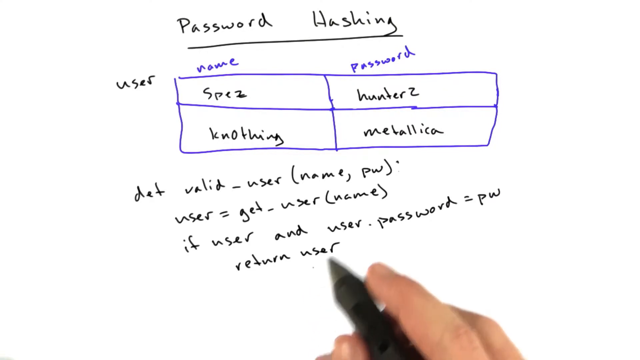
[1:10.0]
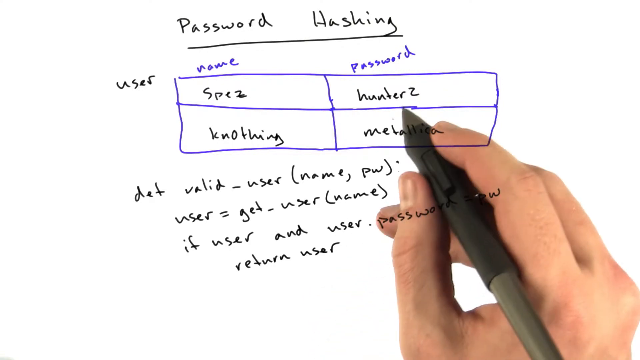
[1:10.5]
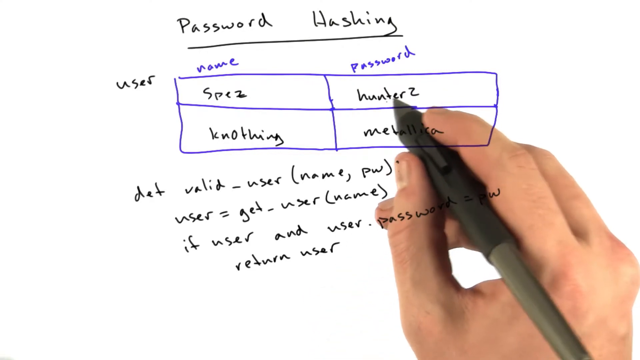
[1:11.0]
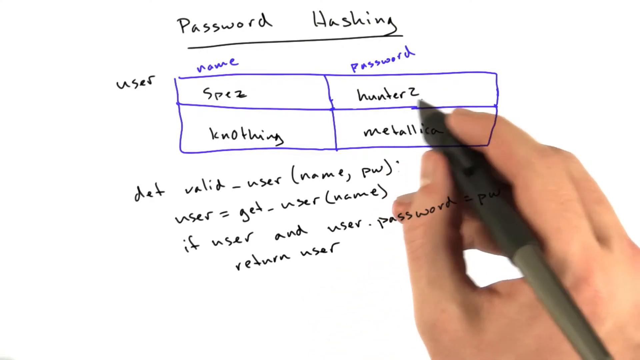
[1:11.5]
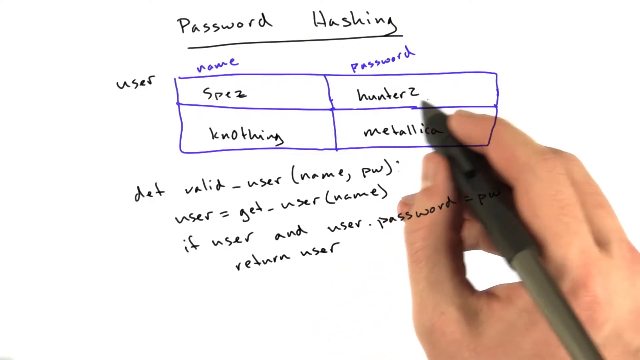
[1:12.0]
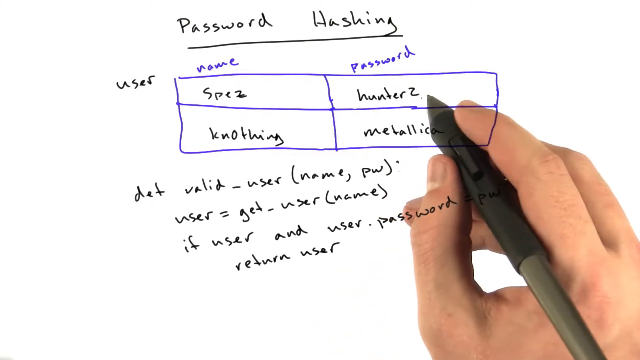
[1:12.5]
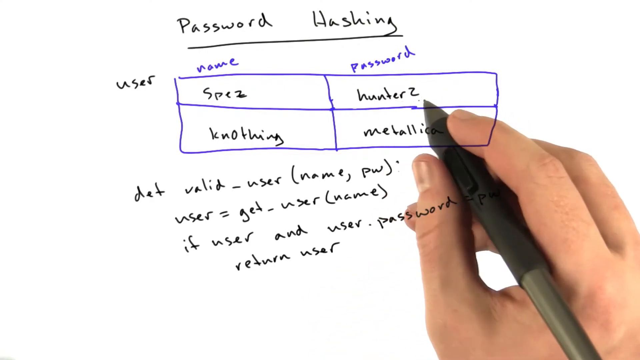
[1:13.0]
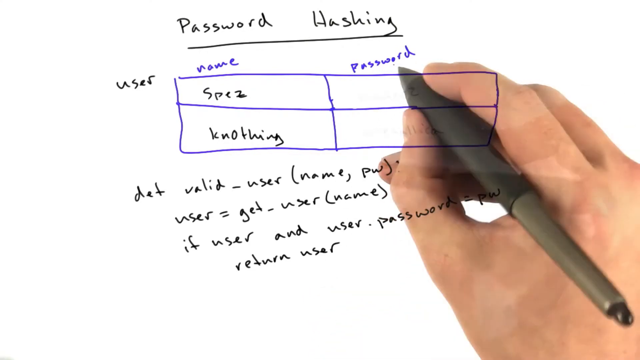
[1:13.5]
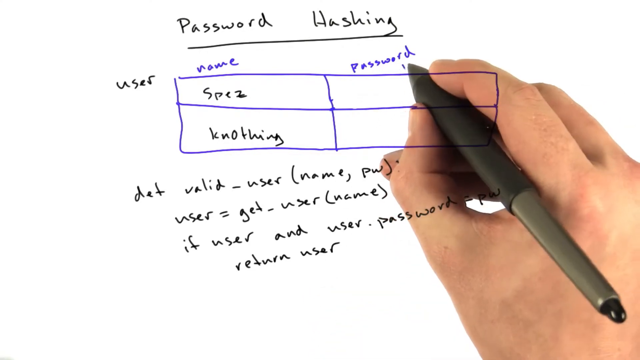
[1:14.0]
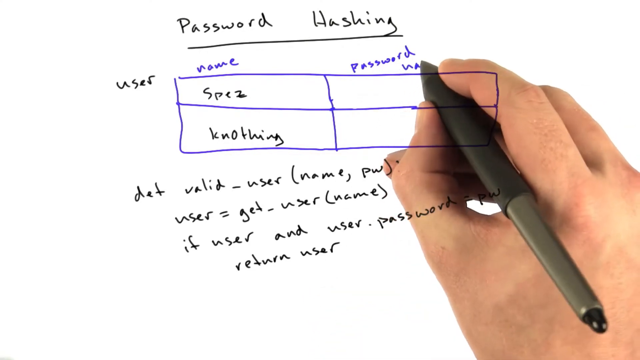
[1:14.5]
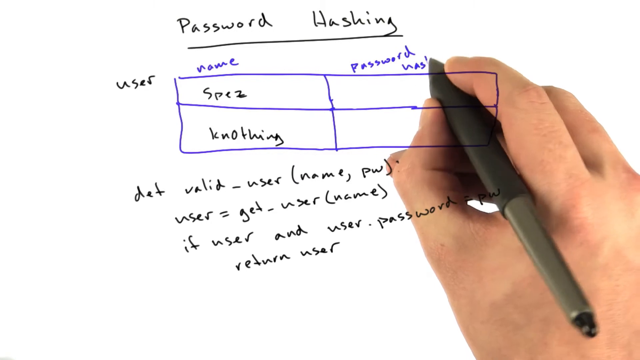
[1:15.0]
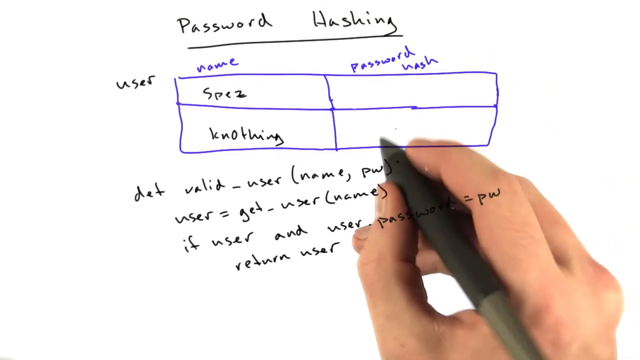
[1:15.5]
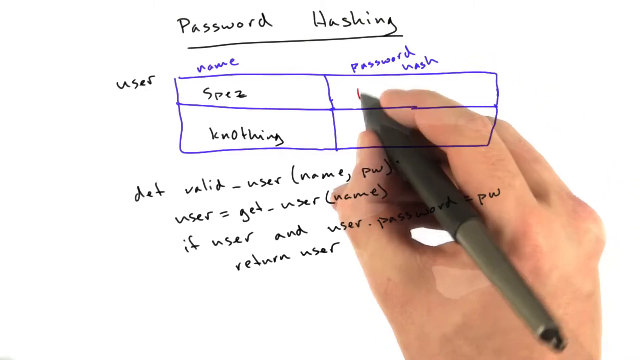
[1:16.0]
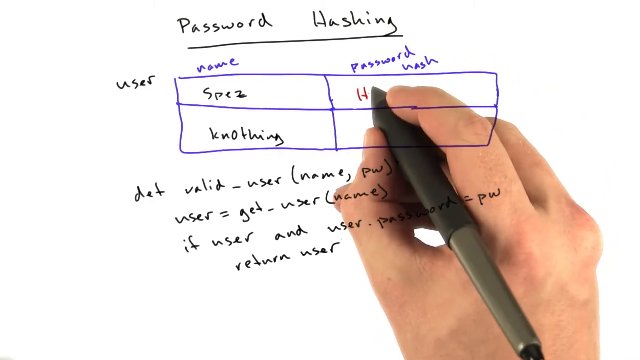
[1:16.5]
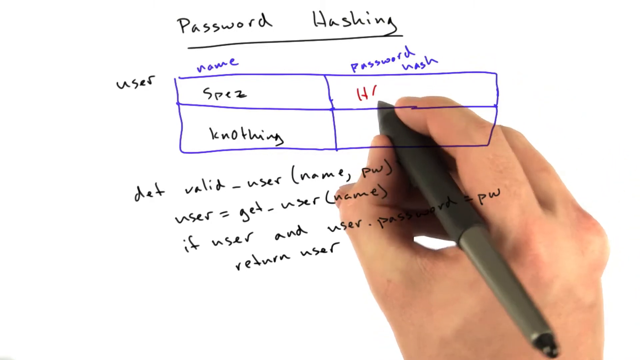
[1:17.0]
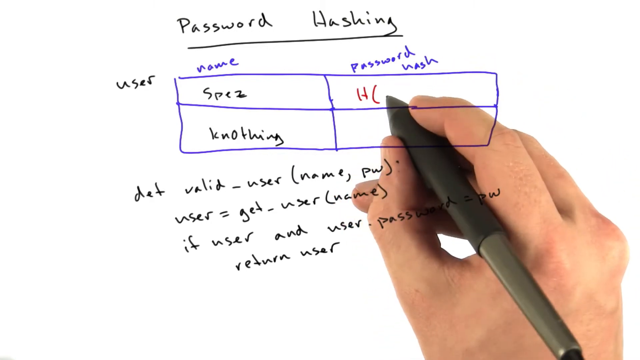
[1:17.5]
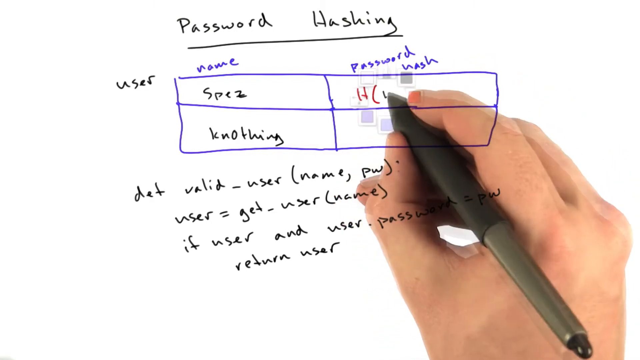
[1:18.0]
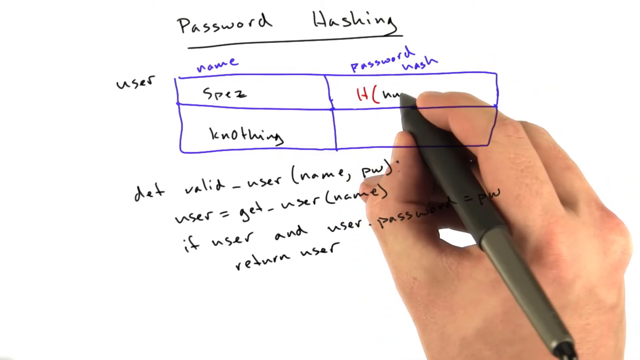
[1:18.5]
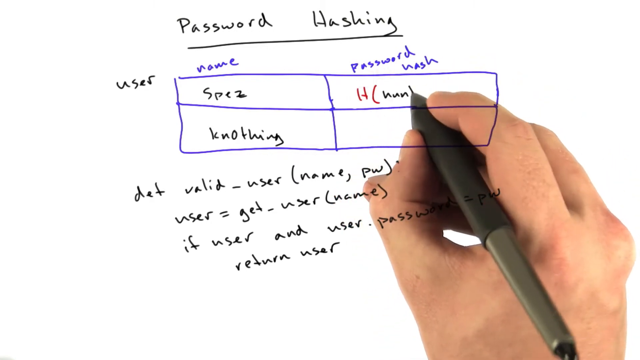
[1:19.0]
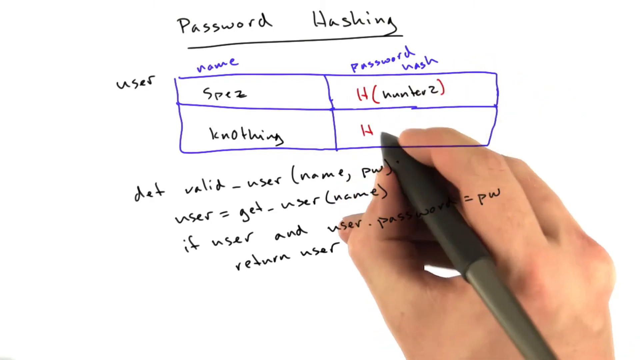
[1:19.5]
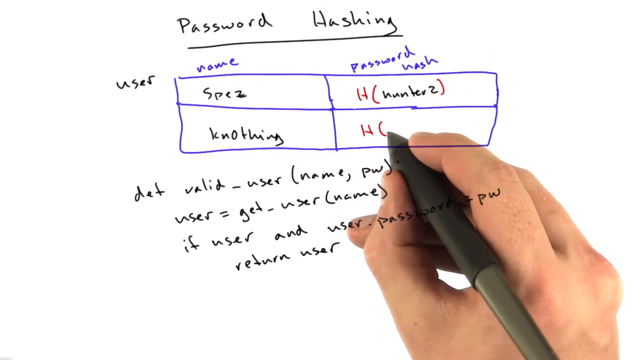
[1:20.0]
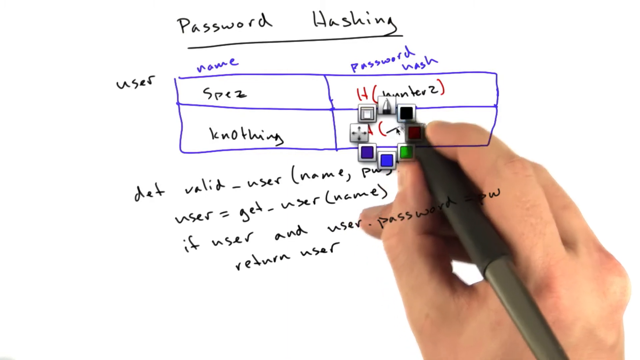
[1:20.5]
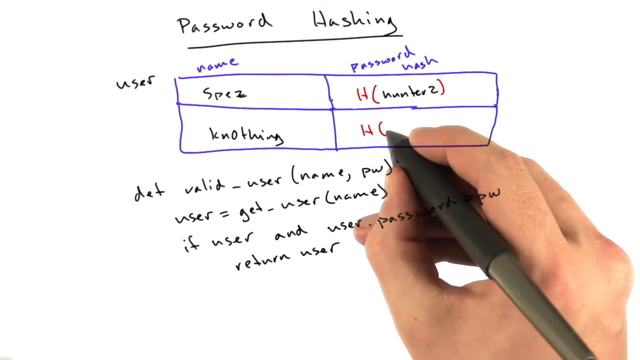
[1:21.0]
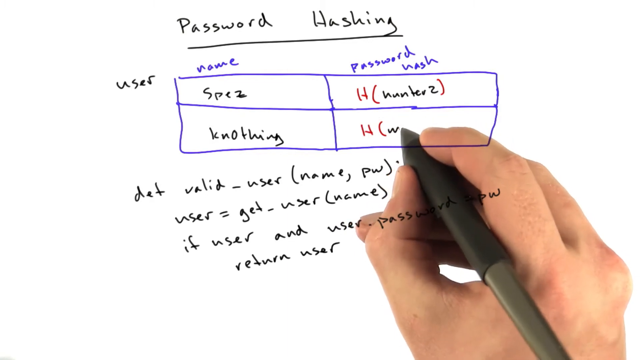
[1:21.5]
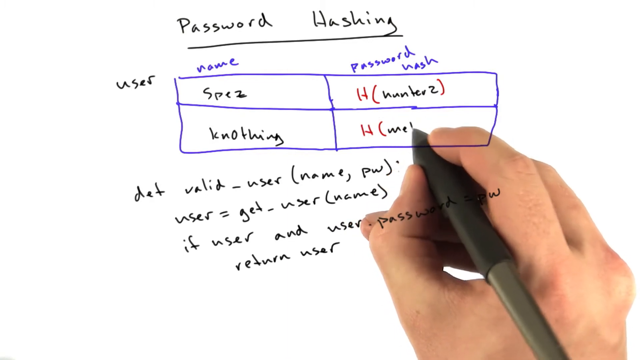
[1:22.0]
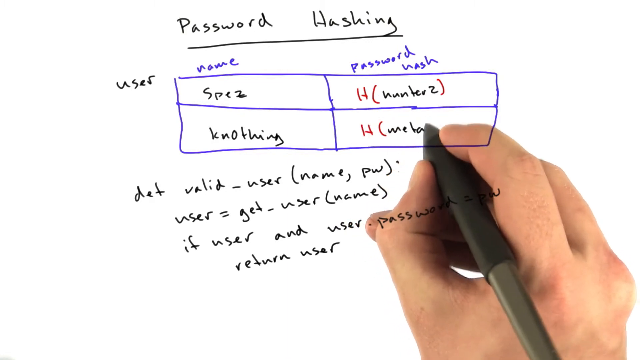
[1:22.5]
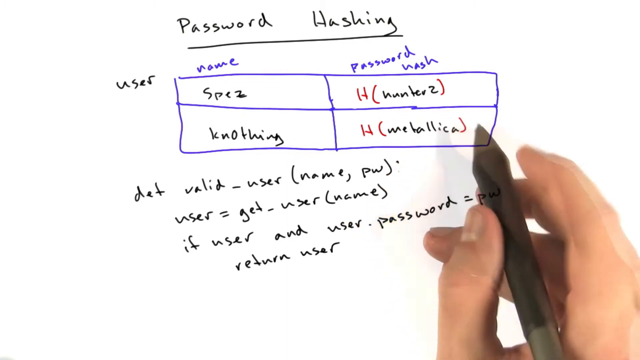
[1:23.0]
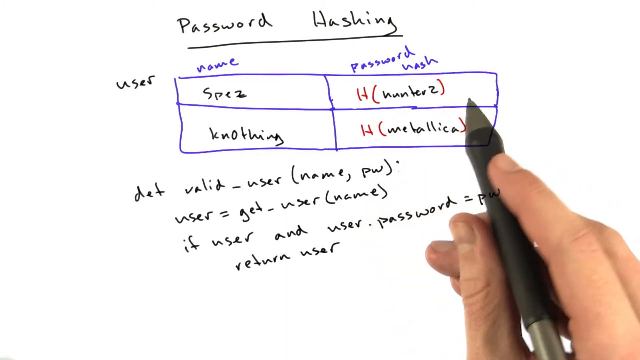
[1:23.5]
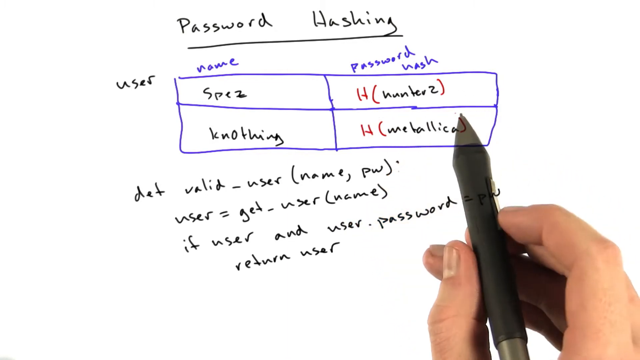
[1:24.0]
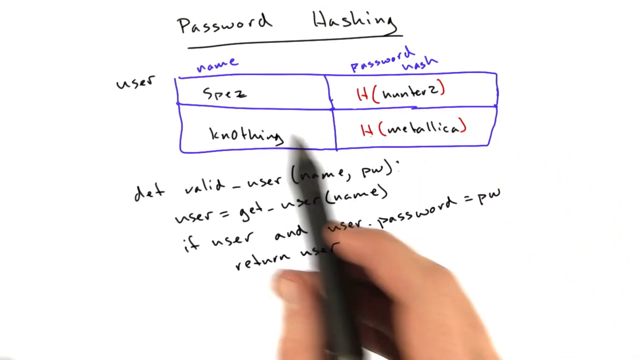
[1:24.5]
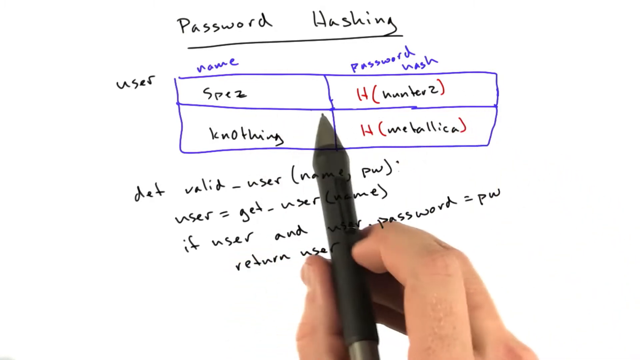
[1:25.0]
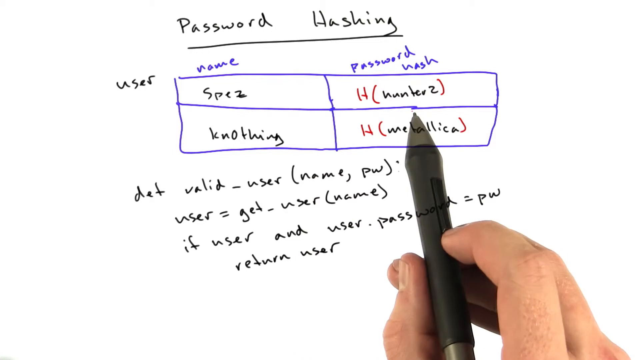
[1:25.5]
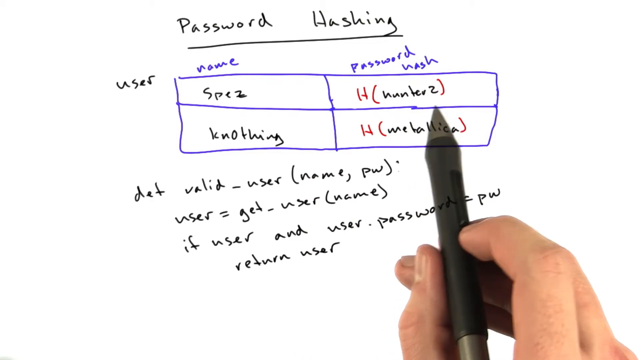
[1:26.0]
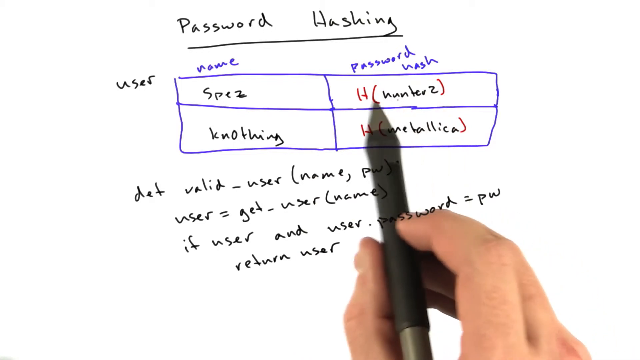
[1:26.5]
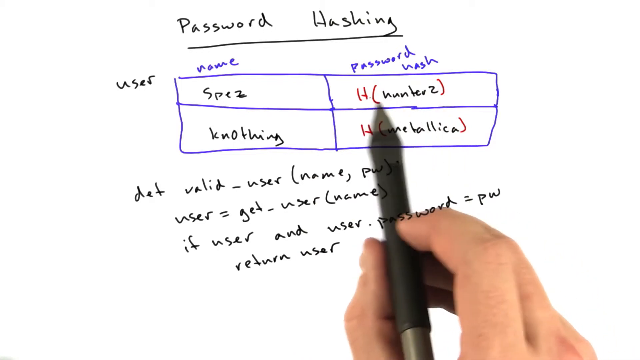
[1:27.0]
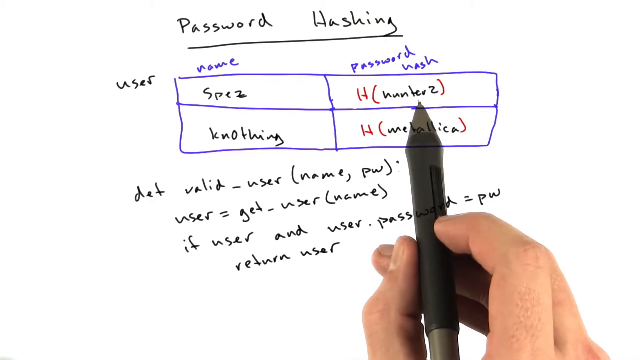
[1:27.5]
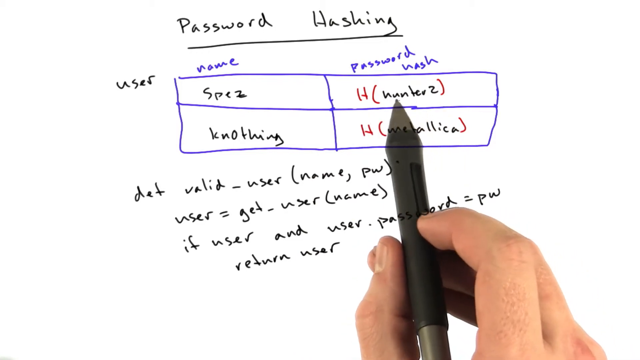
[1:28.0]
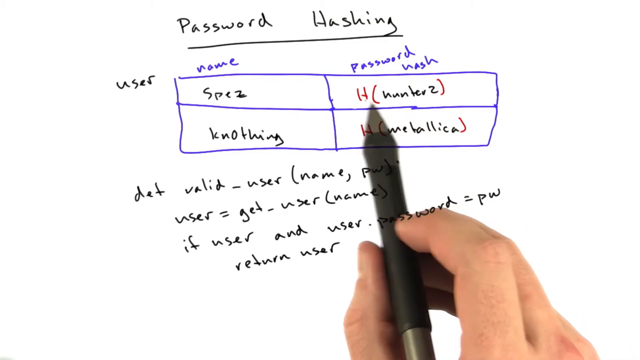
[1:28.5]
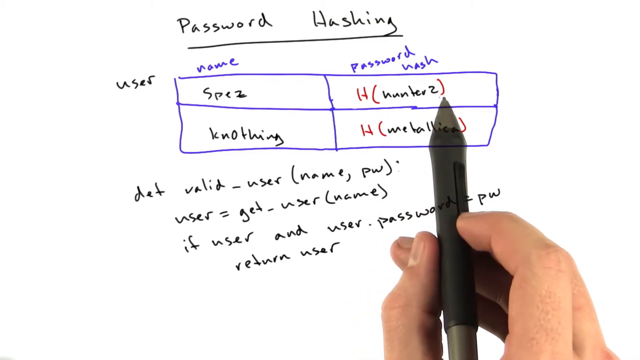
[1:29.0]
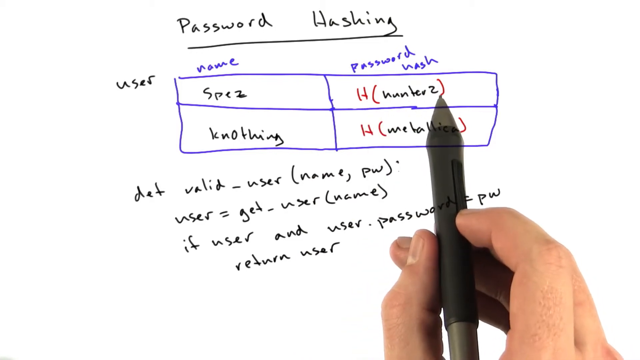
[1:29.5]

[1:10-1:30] The person erases the contents of the cells in the password column. He then adds the word "hash" to the right of "password" and fills the cells with a function written as a capital H with the user's previous password in parentheses. For the user Spez, whose password was Hunterz, the cell now reads H(Hunterz); for the second user, Knothing, it now reads H(Metallica). He then continues explaining, with the pen between his fingers as his hand moves up and down.